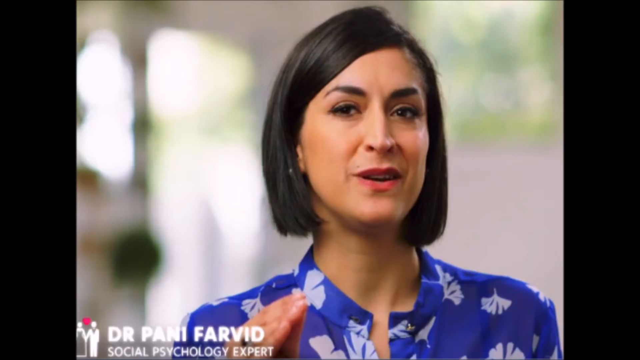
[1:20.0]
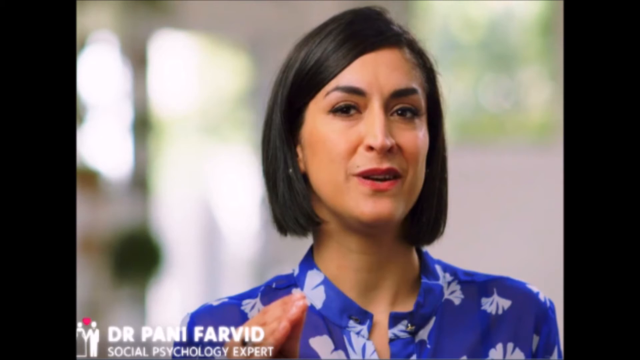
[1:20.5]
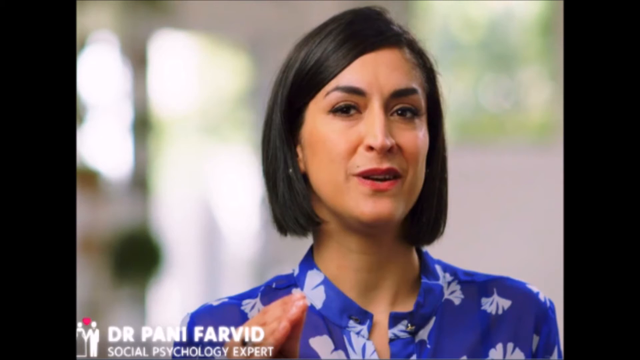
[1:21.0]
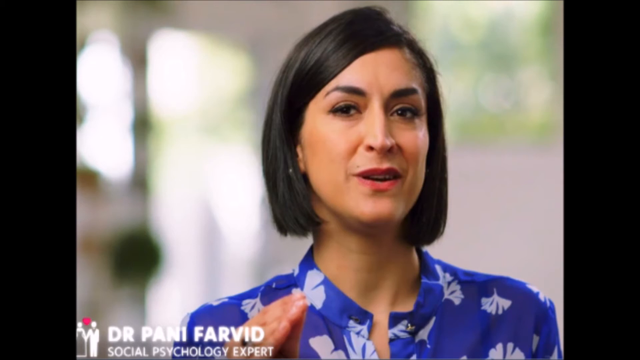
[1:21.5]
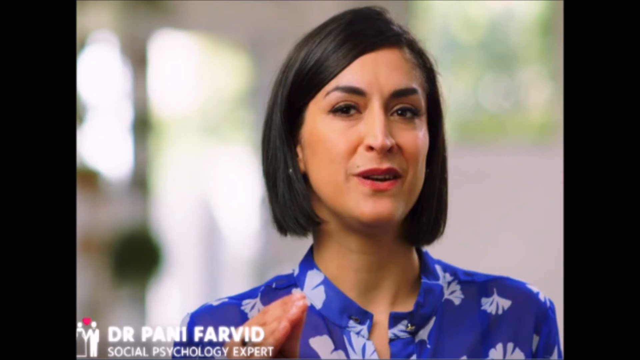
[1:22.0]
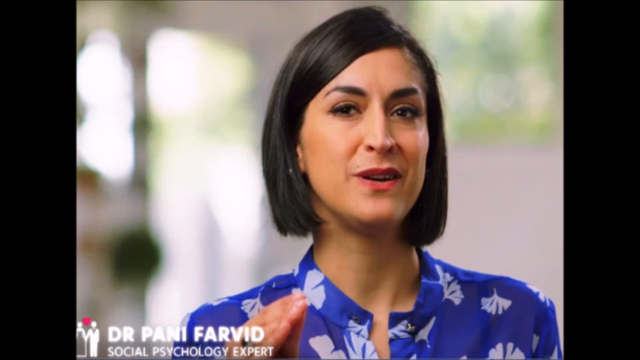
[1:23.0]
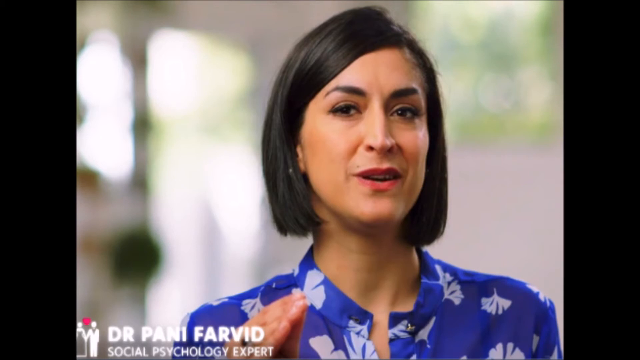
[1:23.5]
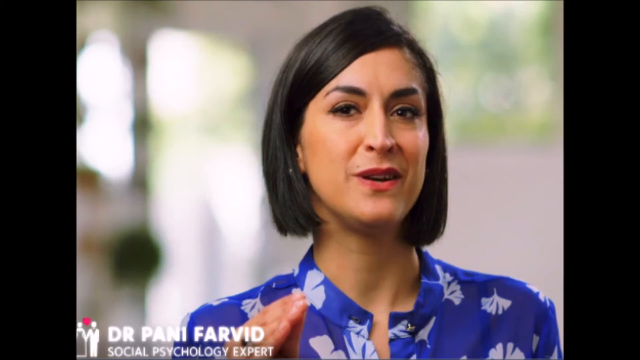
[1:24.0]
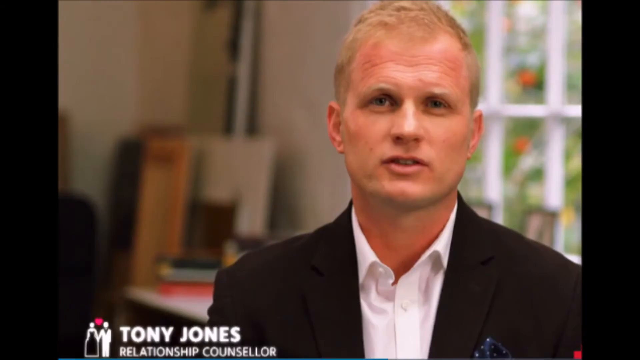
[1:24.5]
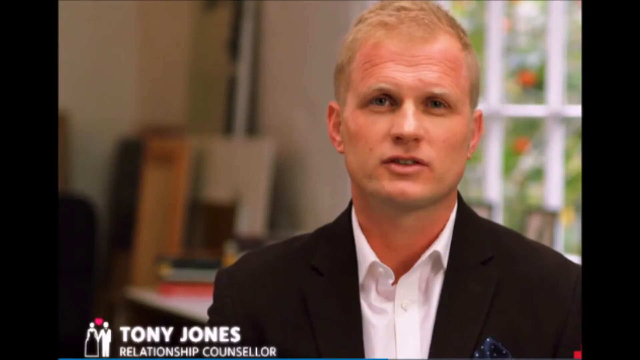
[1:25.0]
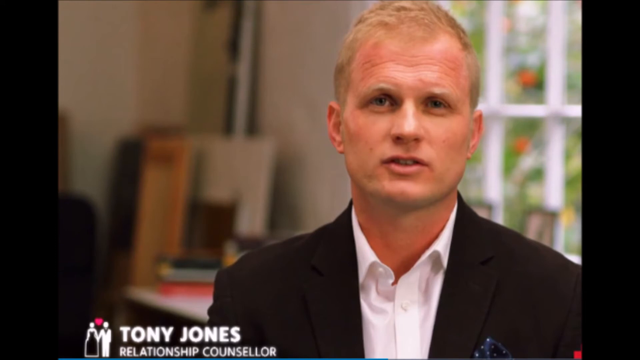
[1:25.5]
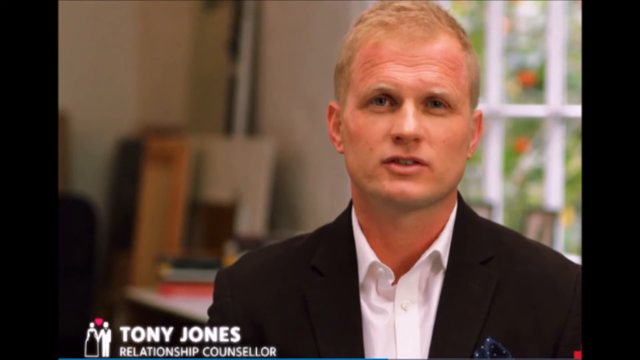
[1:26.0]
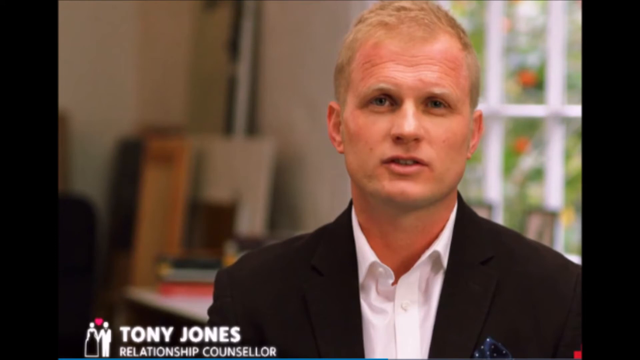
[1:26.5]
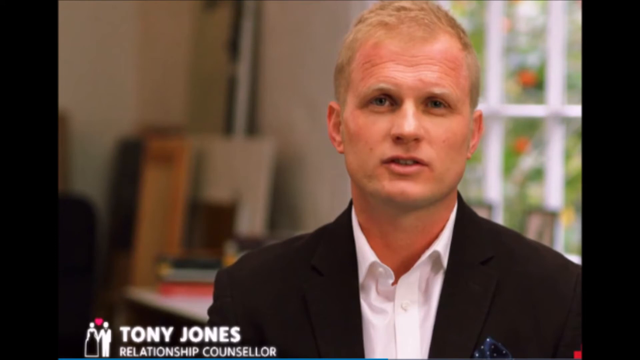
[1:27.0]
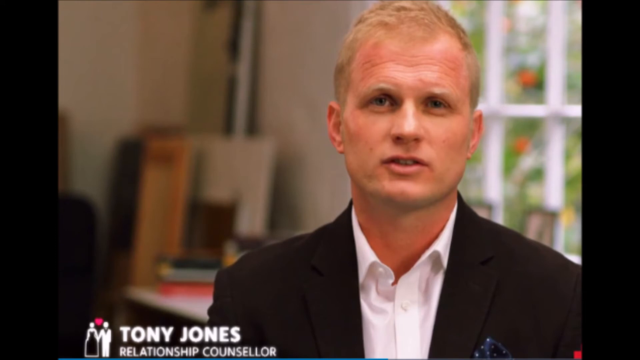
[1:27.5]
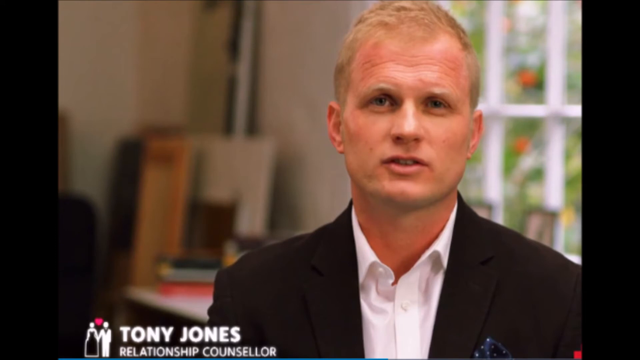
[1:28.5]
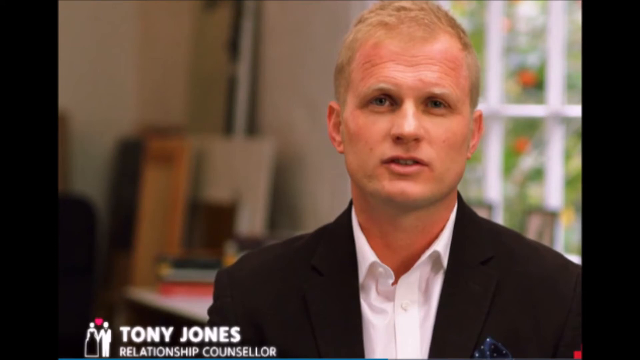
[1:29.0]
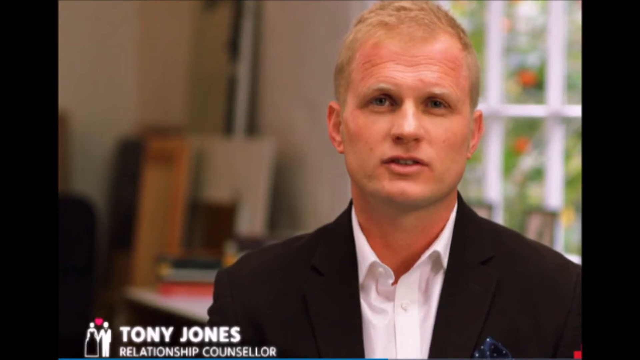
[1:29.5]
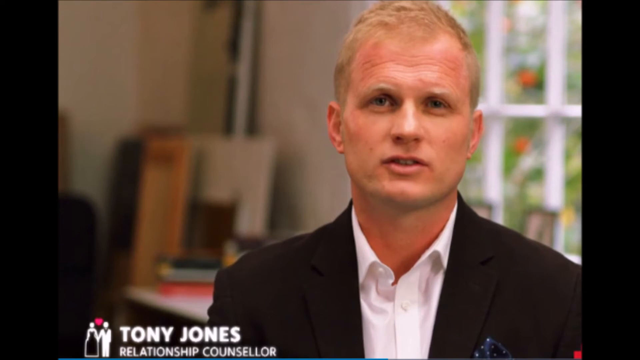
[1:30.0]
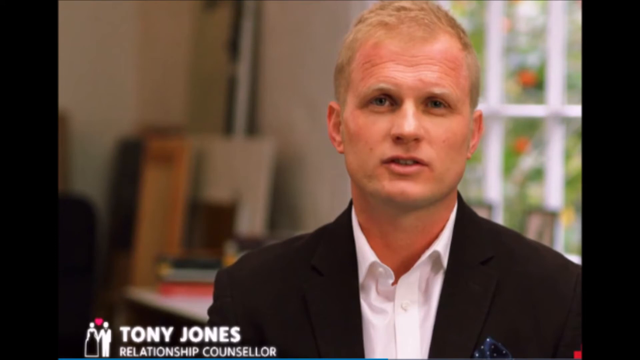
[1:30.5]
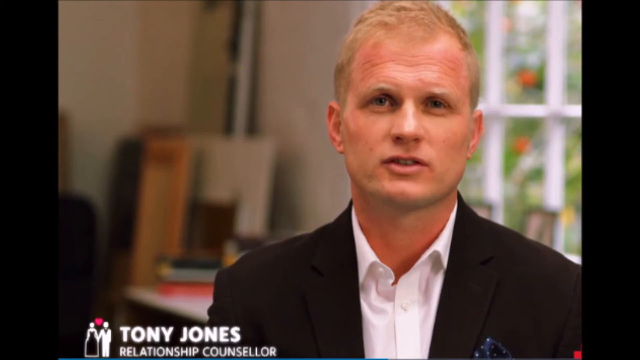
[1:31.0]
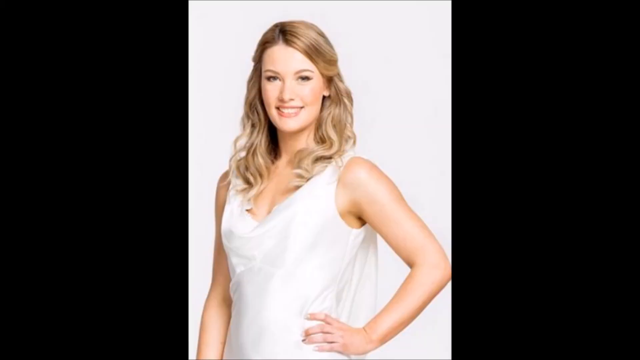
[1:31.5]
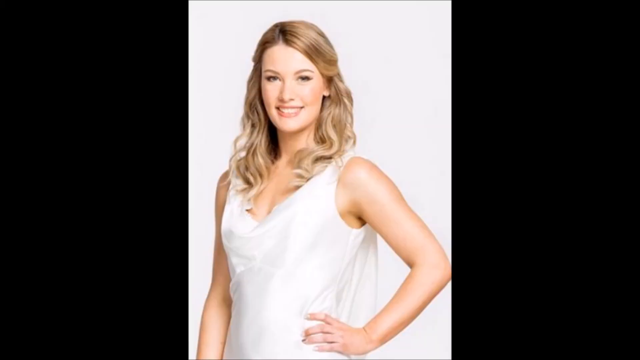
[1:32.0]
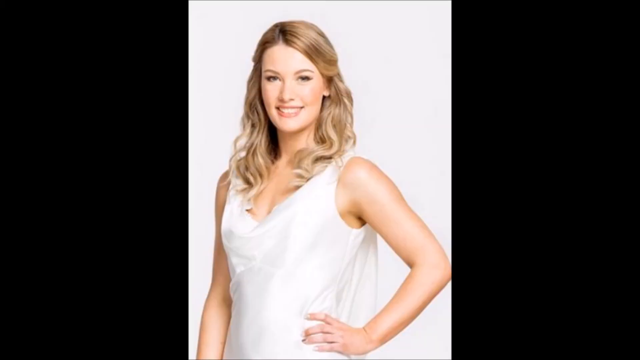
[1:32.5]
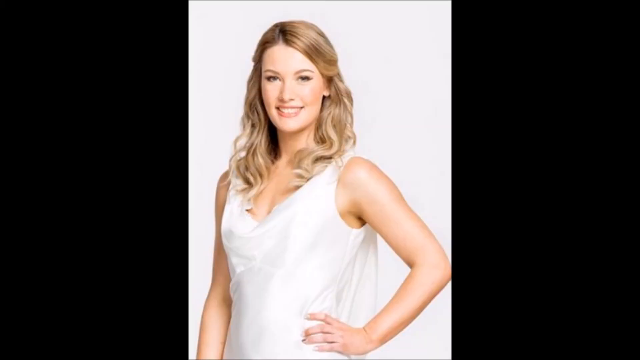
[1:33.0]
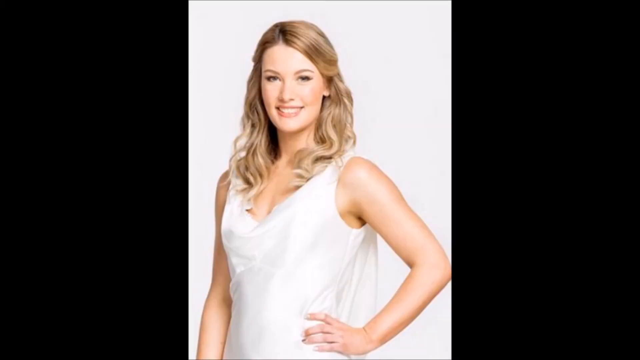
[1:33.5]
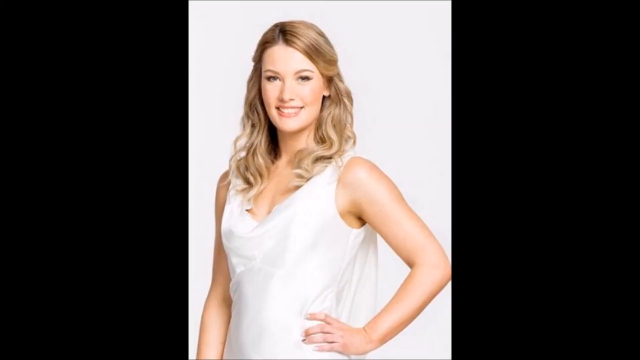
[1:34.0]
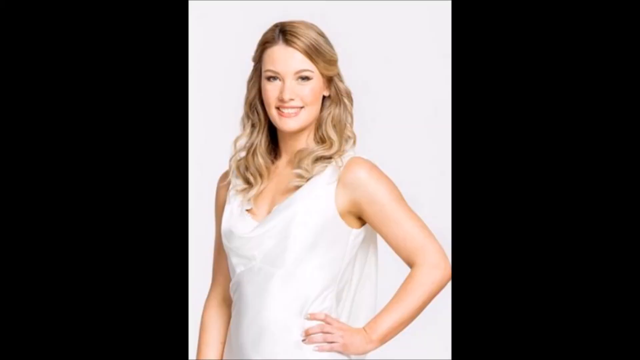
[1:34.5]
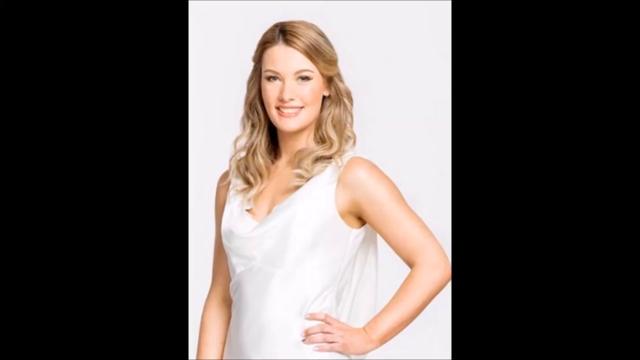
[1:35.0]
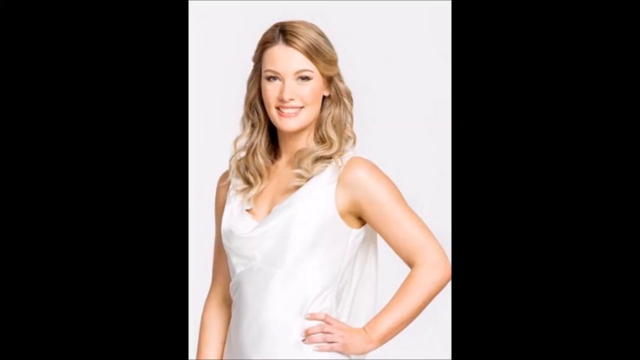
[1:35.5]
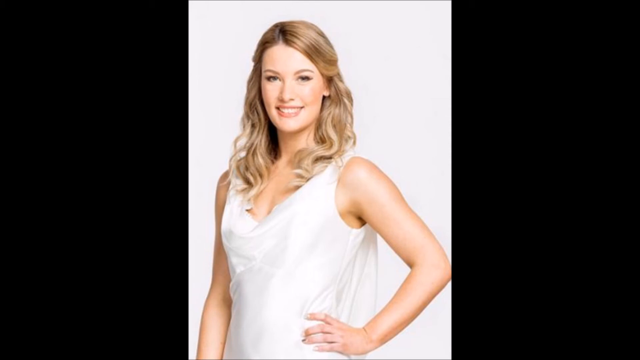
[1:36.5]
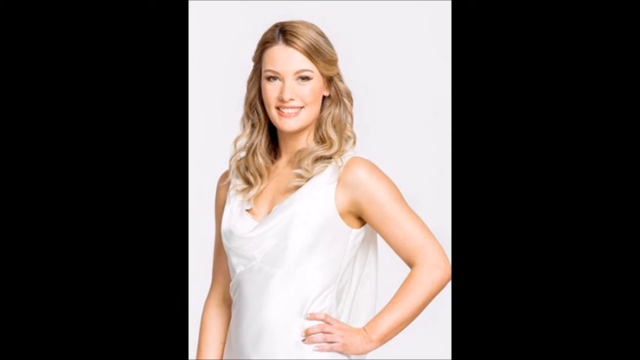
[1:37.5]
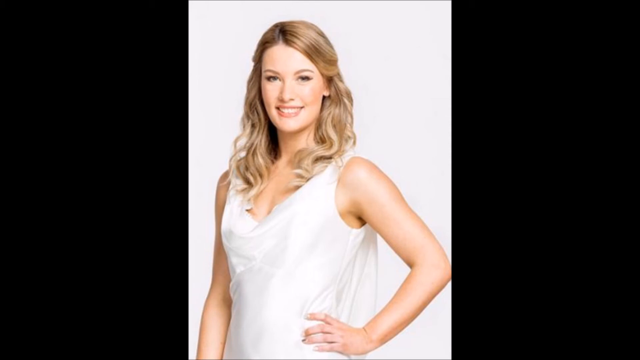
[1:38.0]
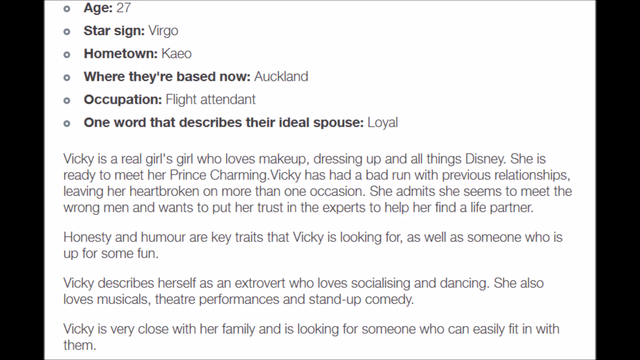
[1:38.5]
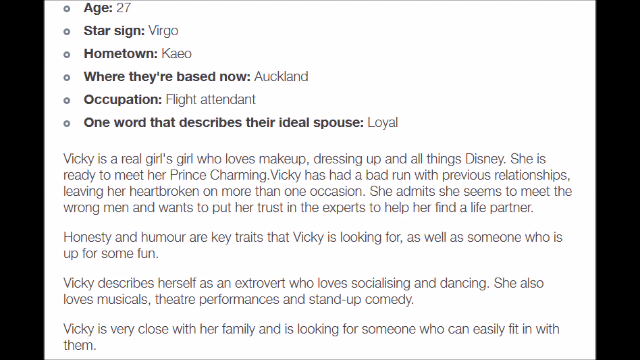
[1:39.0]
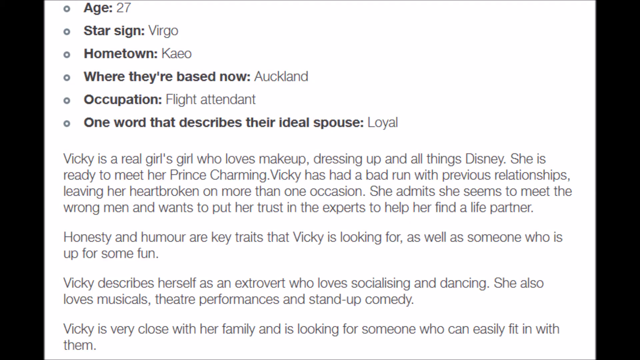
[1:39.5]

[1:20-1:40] A couple of pictures appear. The first shows a woman with black hair in a blue shirt; behind her is some description of a house. The second shows a man in his room, wearing a black suit with a white shirt underneath; this is Tony Jones. The third is a picture of a woman who also wears a white dress. A description of a girl follows: "age 27", star sign "Virgo", based now in "Auckland", occupation "flight attendant", and one word describing the ideal spouse, "loyal". It continues: "loves makeup, dressing up and all things Disney. She's ready to meet her Prince Charming. Wiki has had a bad run with previous relationships, leaving her heartbroken on more than one occasion. She admits she seems to meet the wrong man", and says she wants to put her trust in experts to help her find a life partner. It also reads "Honesty and humor are key traits that Wiki is looking for. Wiki describes herself as an extrovert who loves socializing and dancing. Wiki is very close with her family and is looking for someone who can easily fit in".